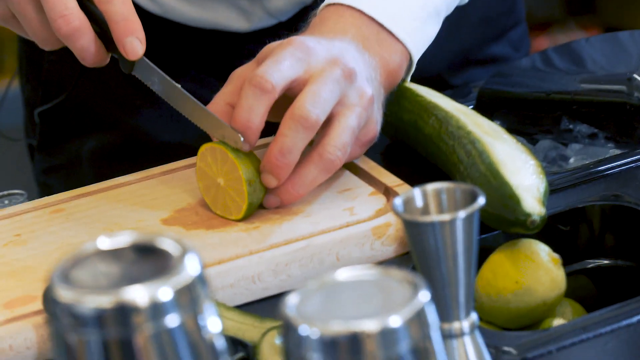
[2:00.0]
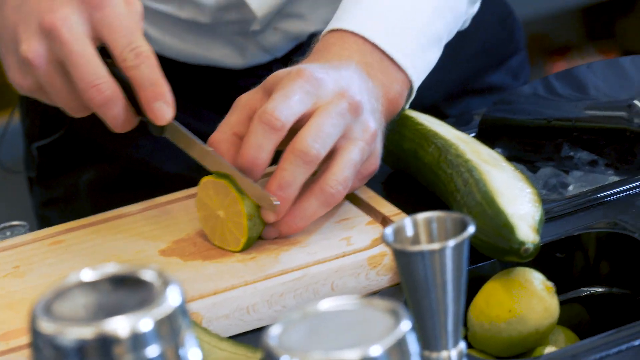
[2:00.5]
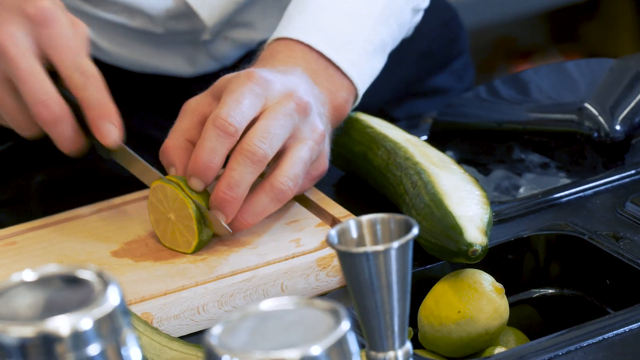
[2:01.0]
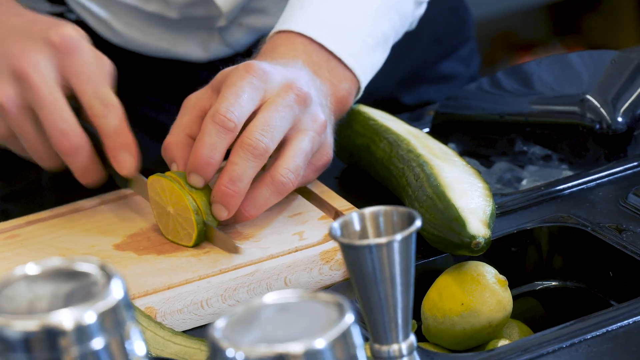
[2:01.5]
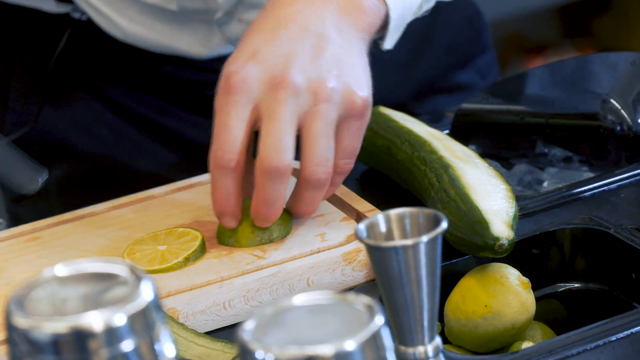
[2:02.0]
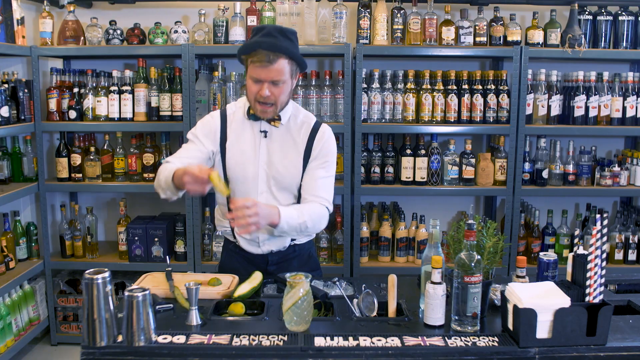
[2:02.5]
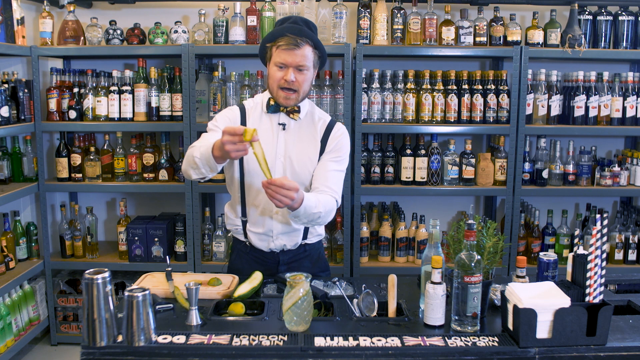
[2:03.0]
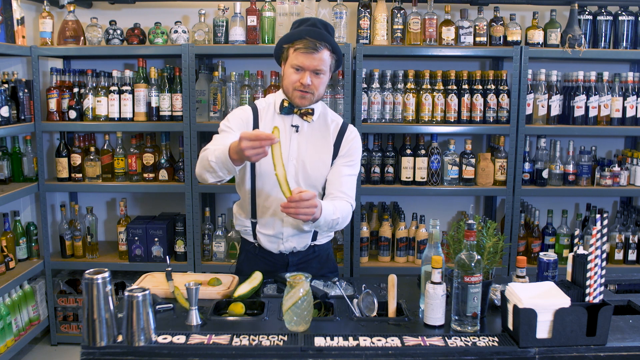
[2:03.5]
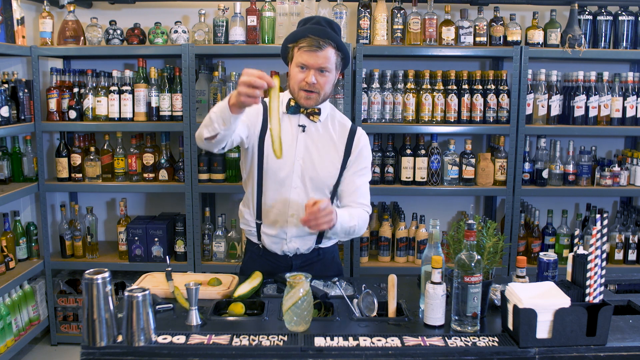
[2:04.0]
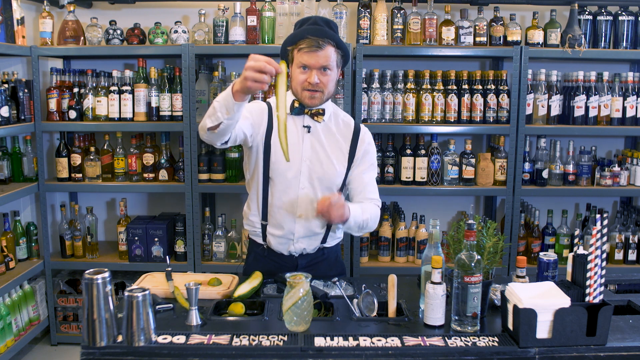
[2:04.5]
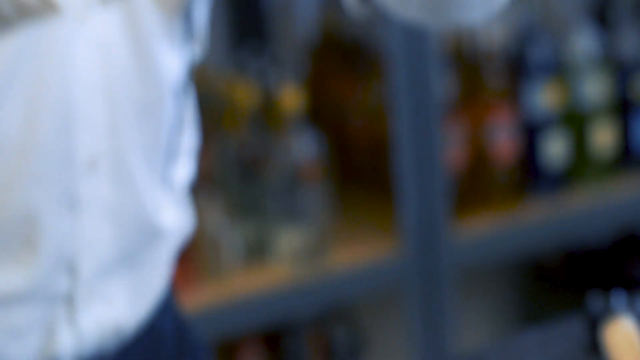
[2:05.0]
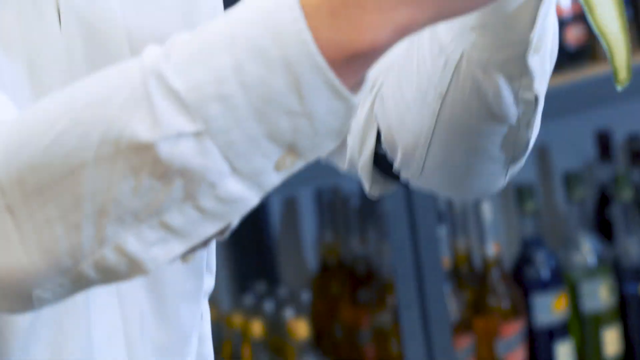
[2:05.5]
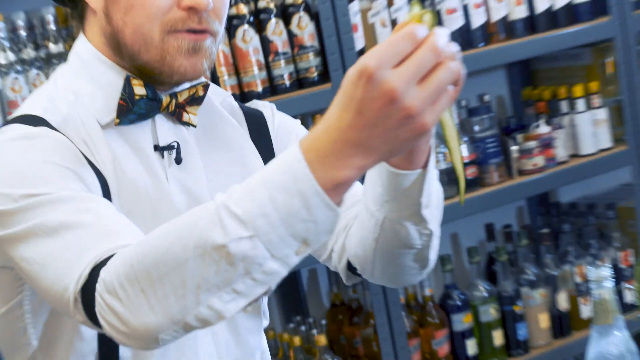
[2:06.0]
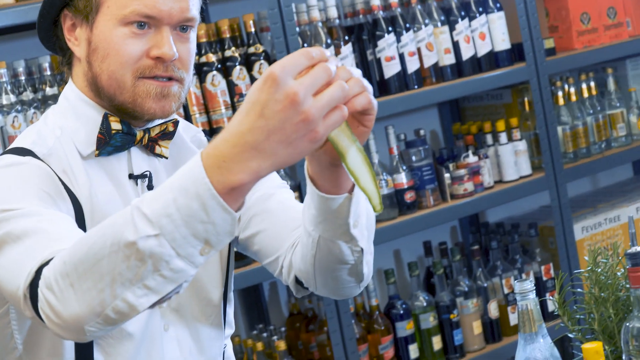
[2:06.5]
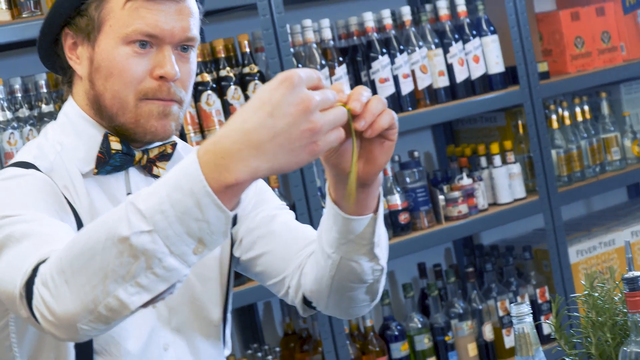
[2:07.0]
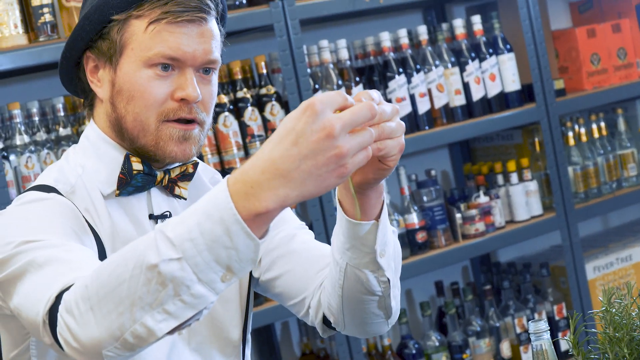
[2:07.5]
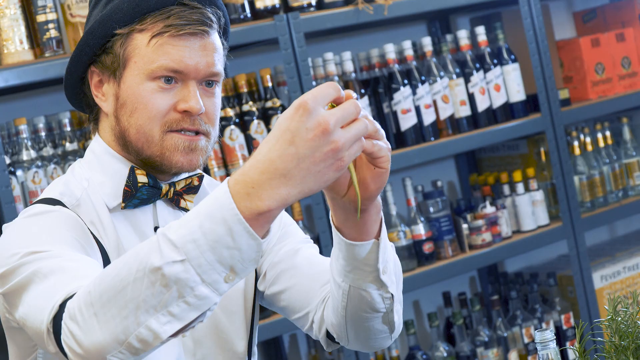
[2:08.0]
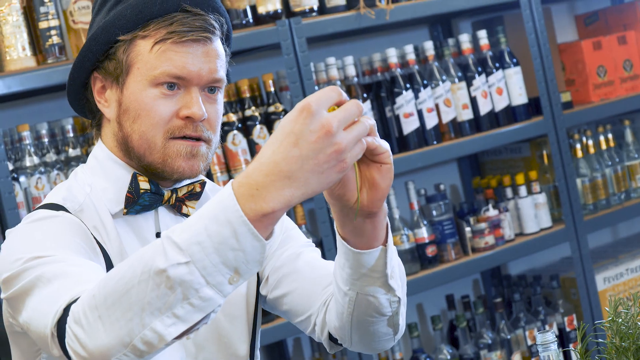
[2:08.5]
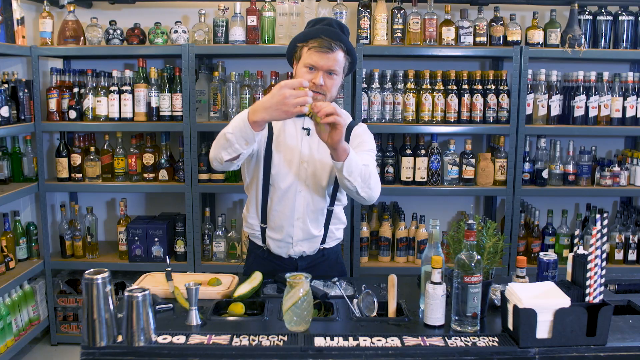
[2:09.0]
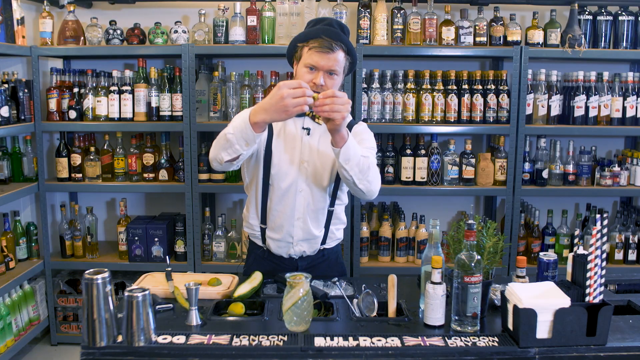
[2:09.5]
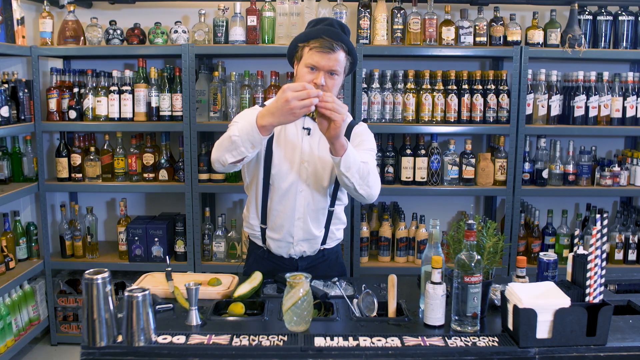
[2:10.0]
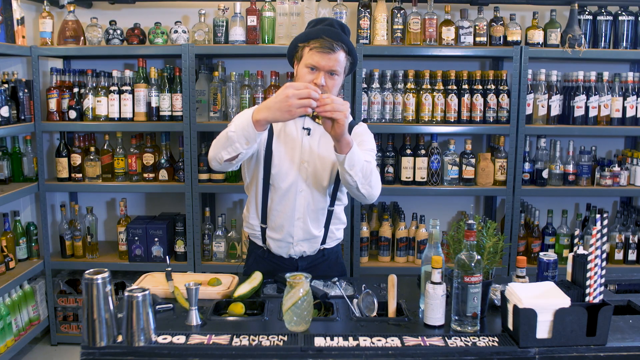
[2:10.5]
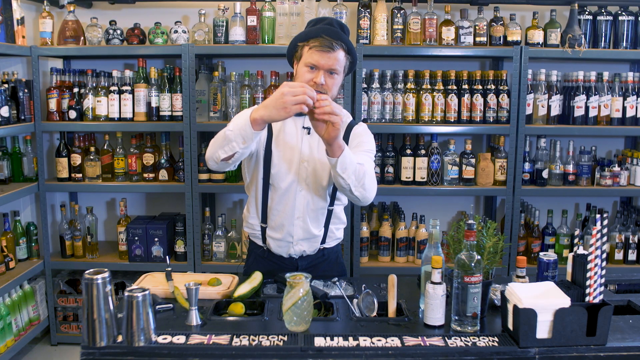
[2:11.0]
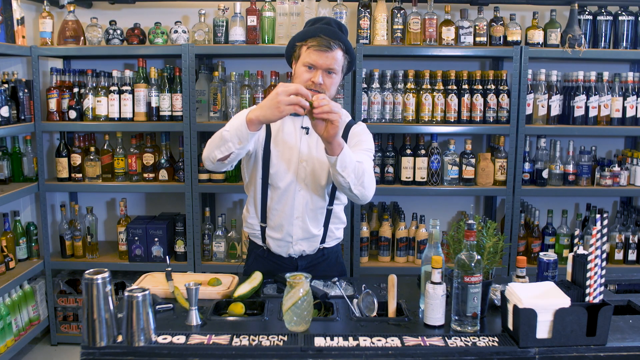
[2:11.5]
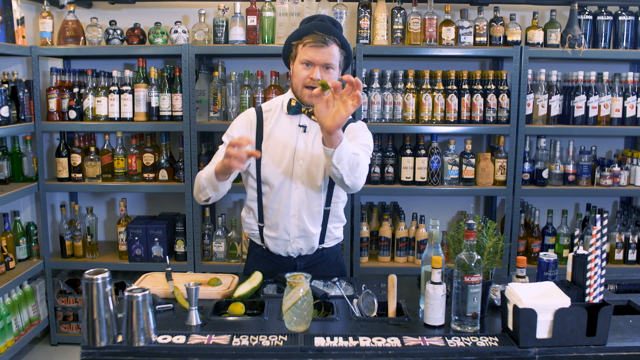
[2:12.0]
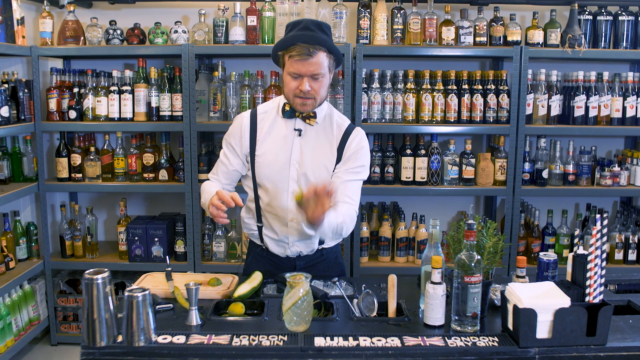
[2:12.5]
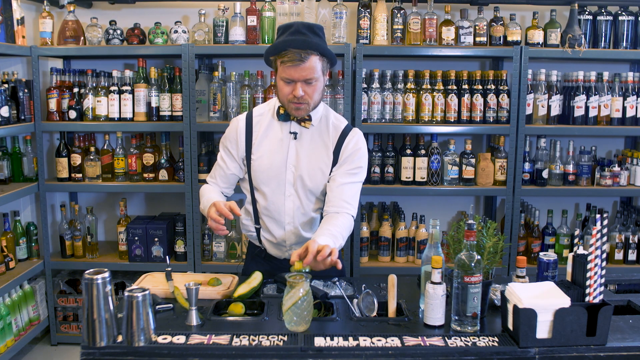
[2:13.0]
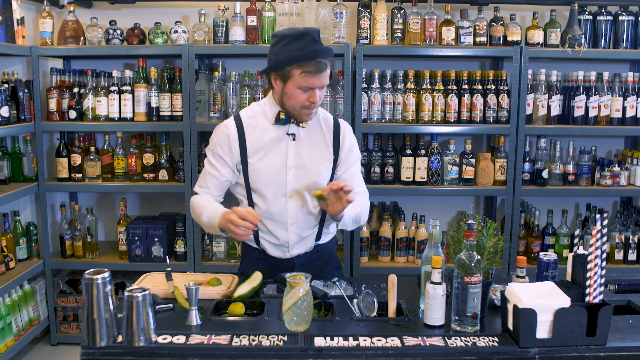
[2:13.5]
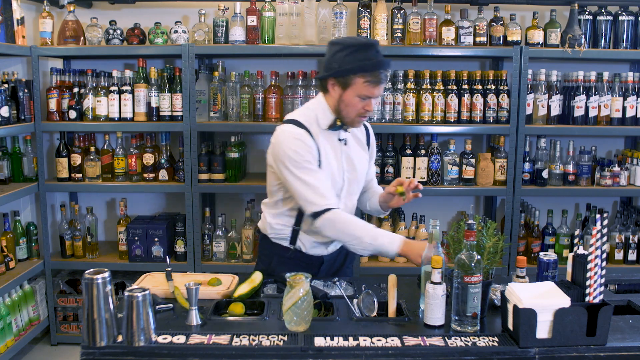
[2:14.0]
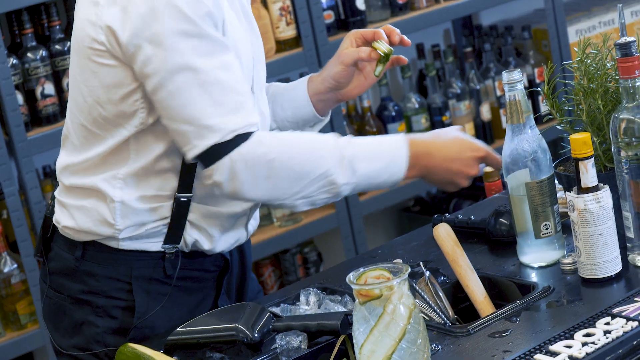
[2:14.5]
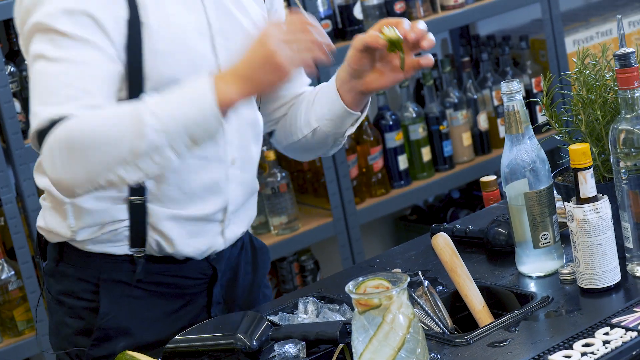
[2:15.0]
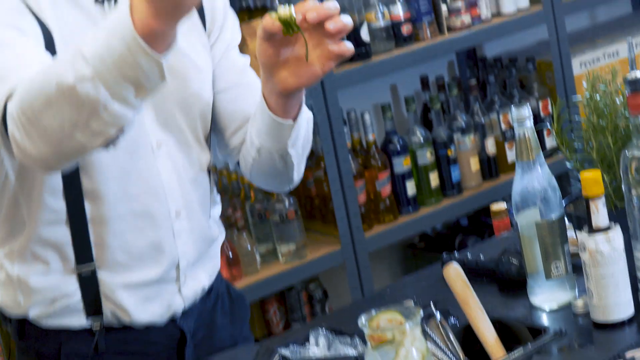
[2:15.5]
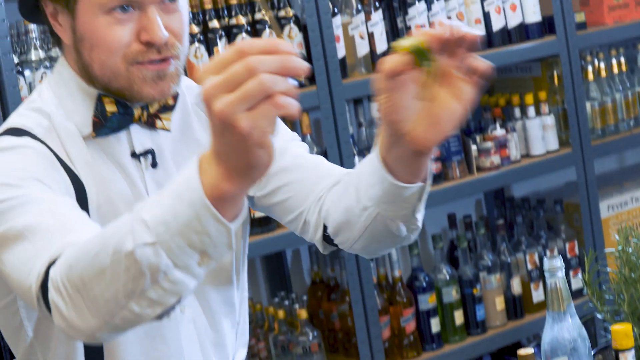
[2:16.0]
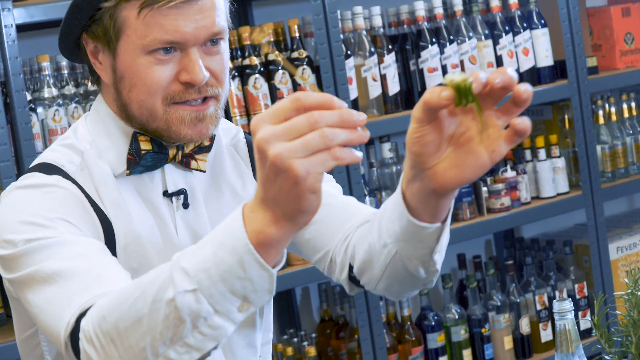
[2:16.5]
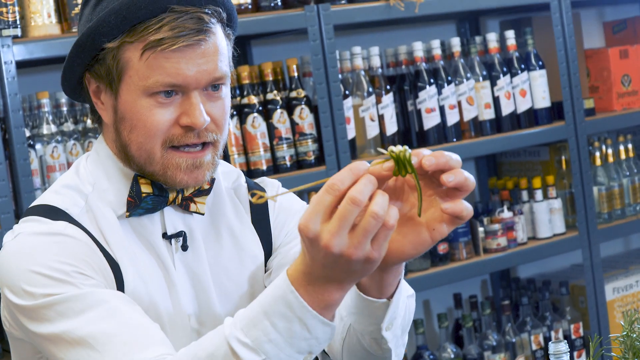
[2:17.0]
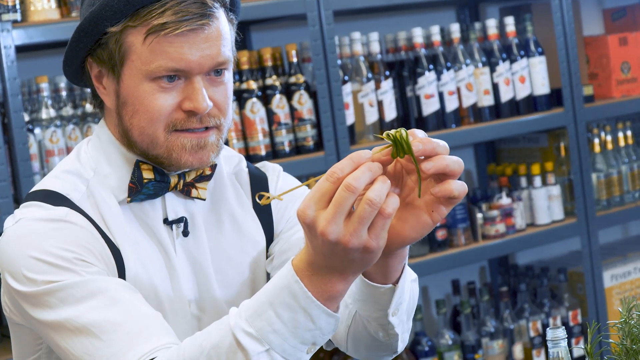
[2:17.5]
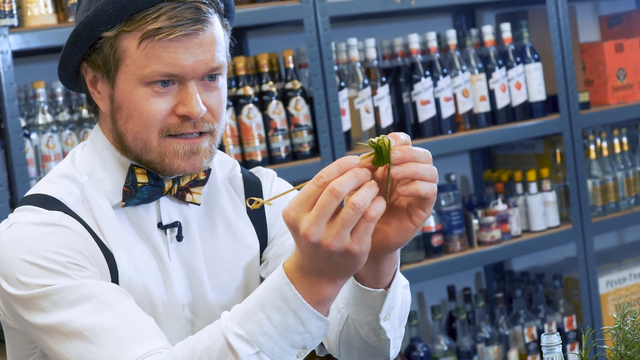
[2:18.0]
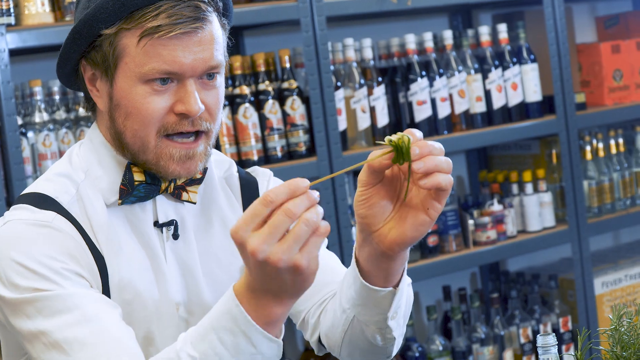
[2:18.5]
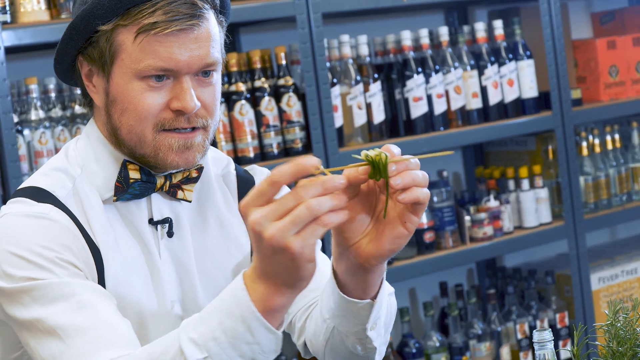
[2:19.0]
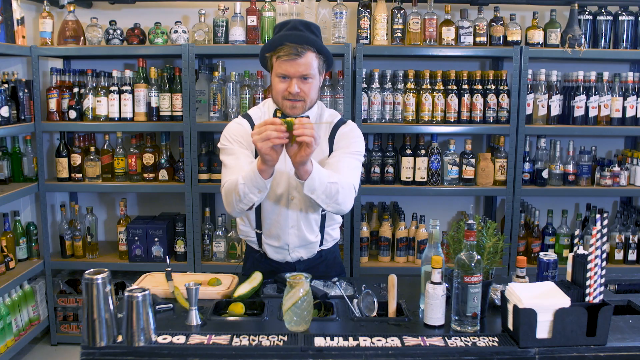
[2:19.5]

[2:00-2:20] Rasmus slices through the lime. Next to his hand is the remaining part of the neatly sliced cucumber, its interior visible while the exterior is still green. After slicing part of the lime, he places the rest face down on the chopping board. As his lips continuously move, he grabs another slice of cucumber and raises it up, showing its length, then takes it with both hands, wraps it around, points it at the screen and dips it into the pineapple-shaped glass cup. Still holding the wrapped cucumber, he grabs what looks like a stick and punctures the cucumber with it so the cucumber is on the stick, then holds it up for viewers to see.